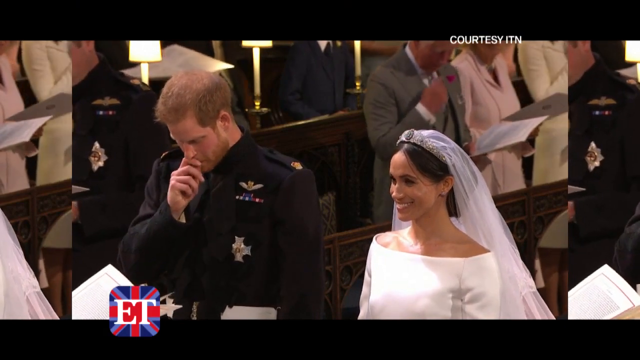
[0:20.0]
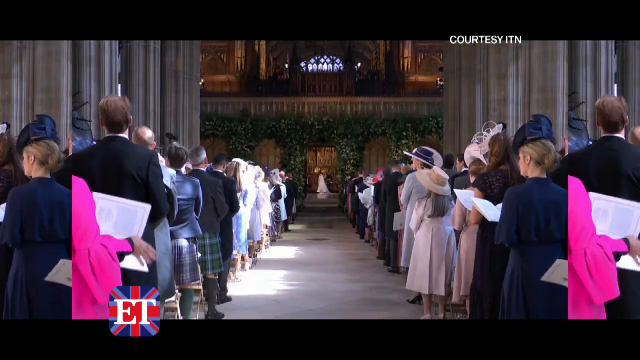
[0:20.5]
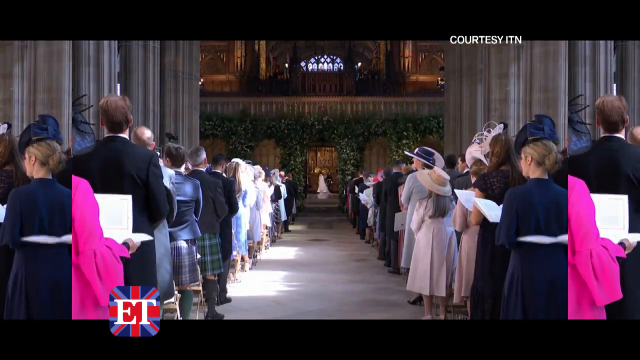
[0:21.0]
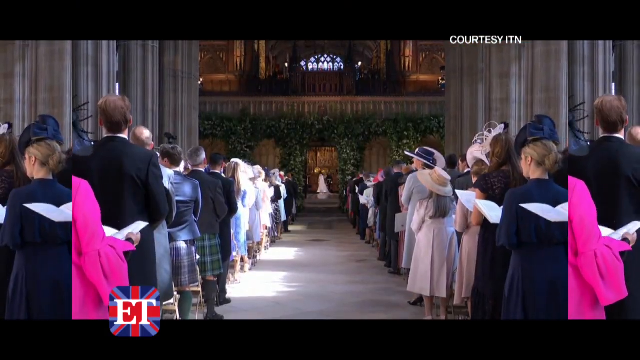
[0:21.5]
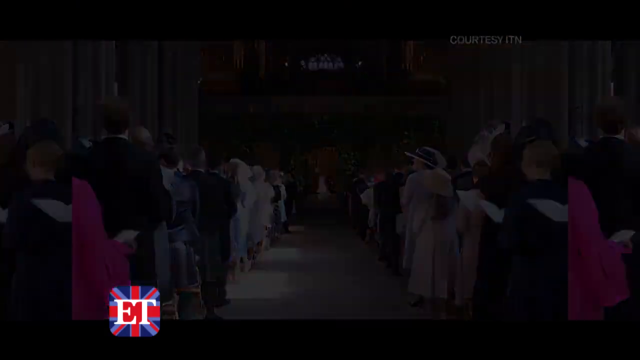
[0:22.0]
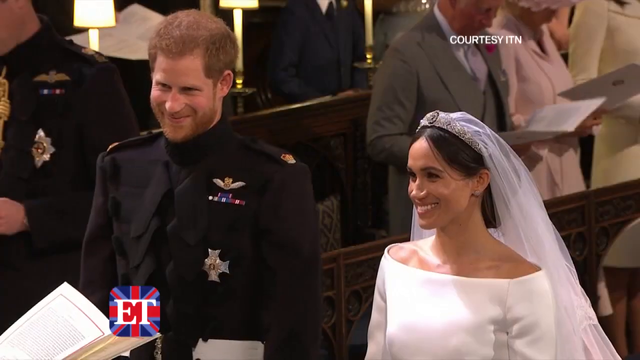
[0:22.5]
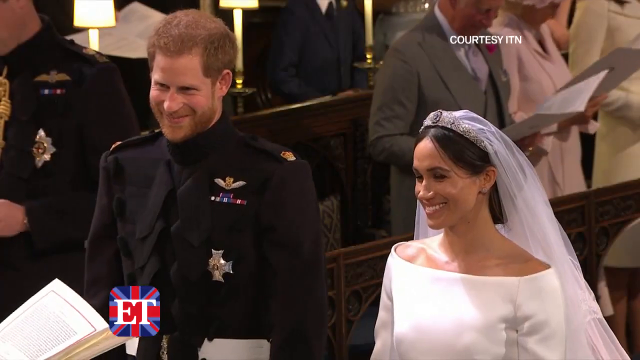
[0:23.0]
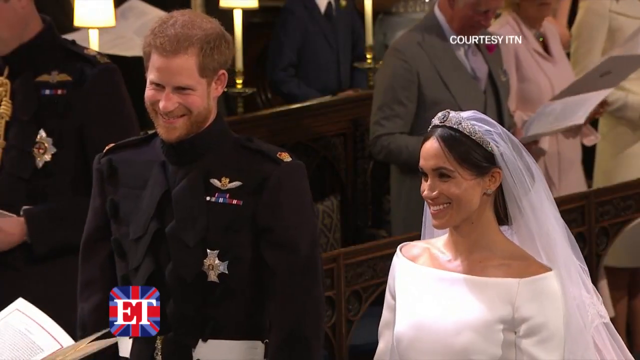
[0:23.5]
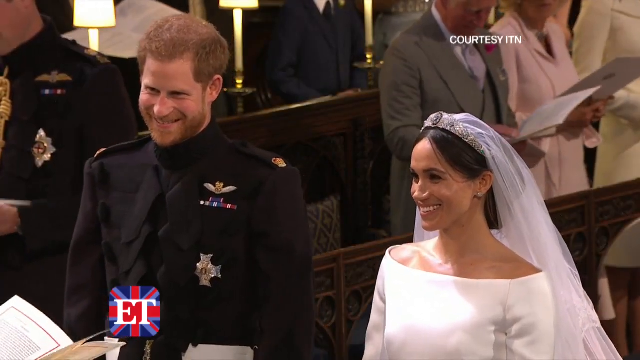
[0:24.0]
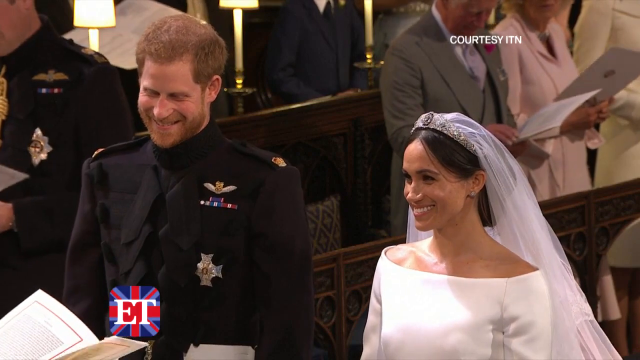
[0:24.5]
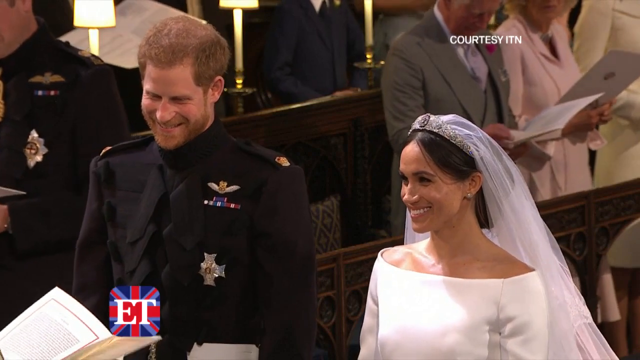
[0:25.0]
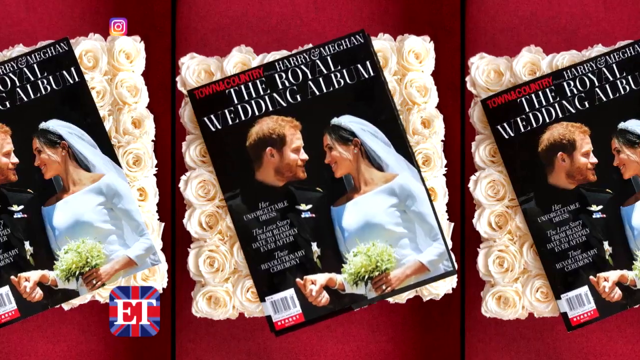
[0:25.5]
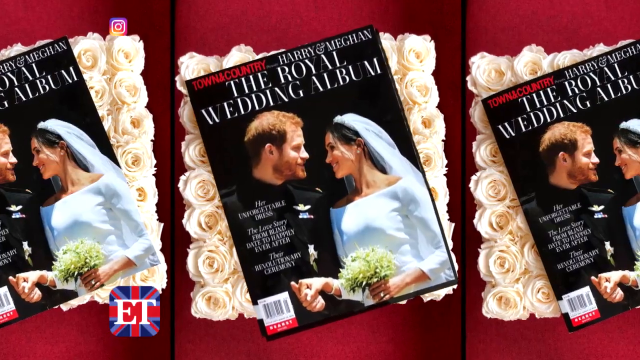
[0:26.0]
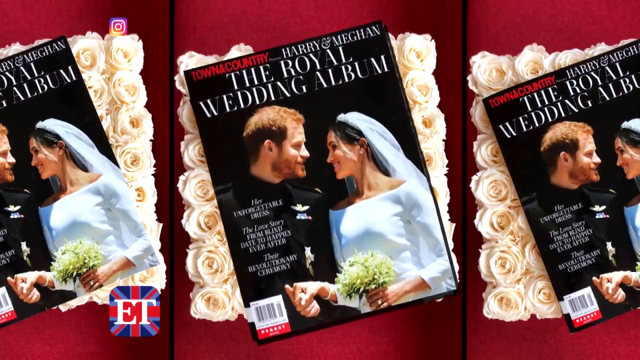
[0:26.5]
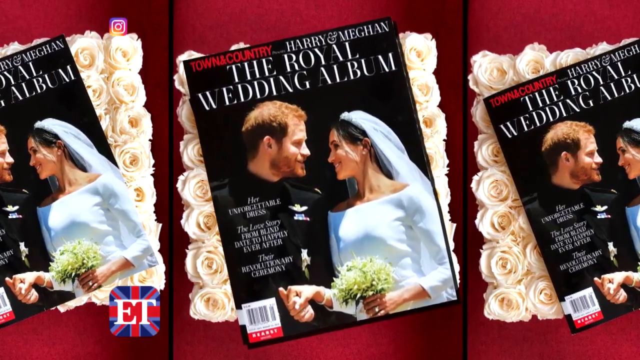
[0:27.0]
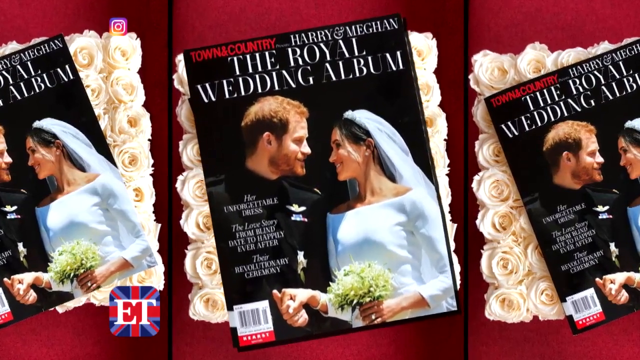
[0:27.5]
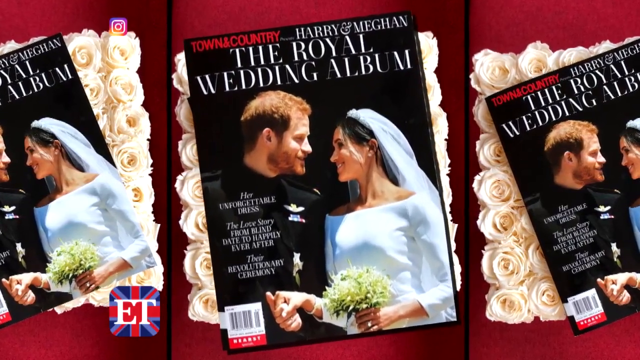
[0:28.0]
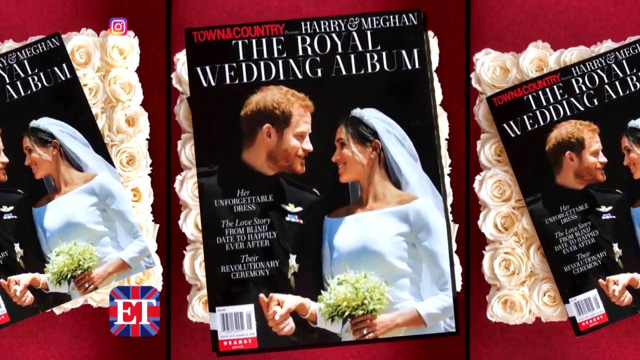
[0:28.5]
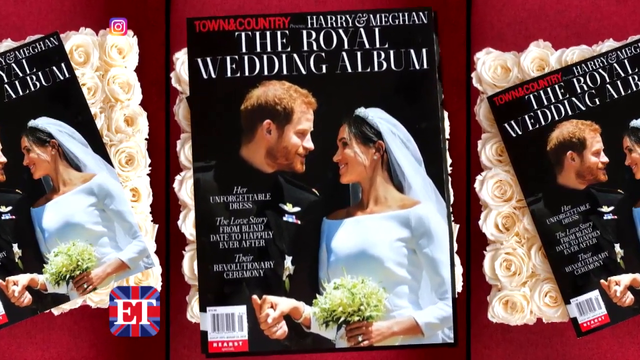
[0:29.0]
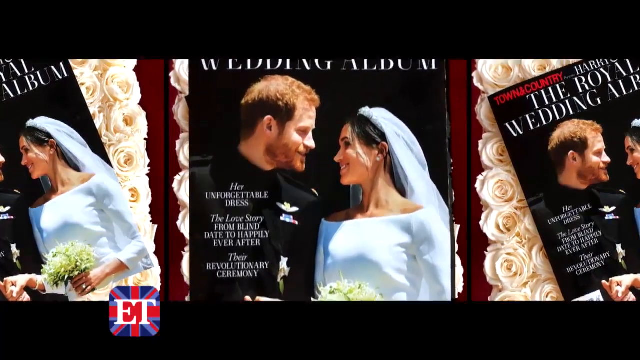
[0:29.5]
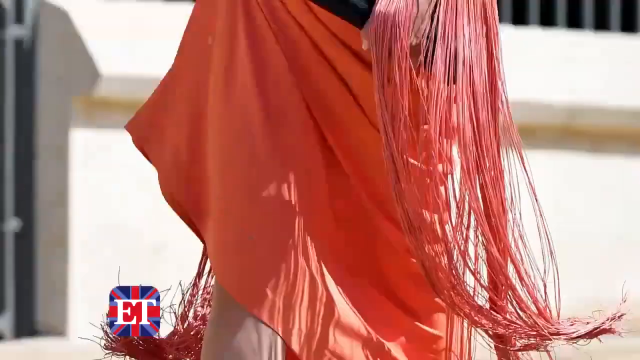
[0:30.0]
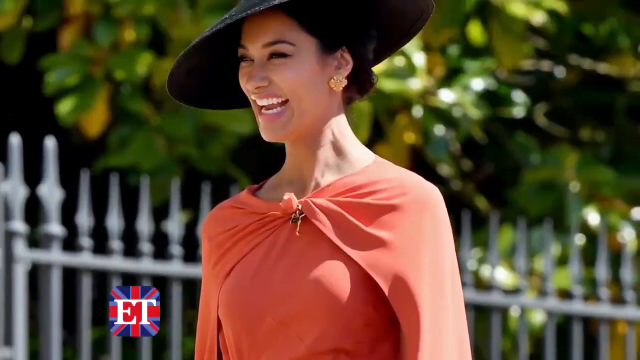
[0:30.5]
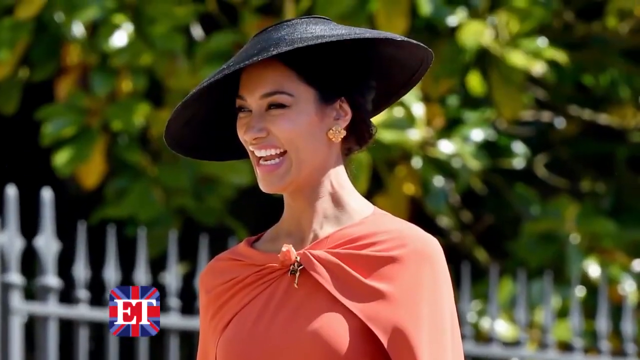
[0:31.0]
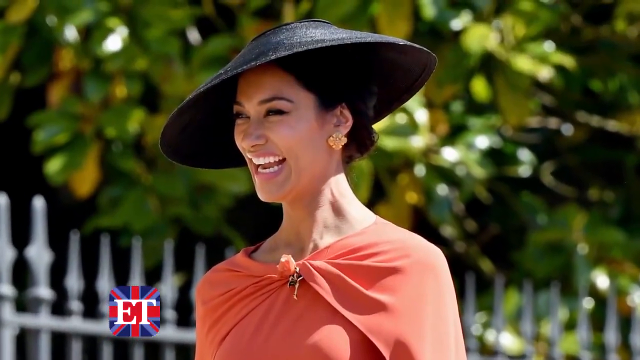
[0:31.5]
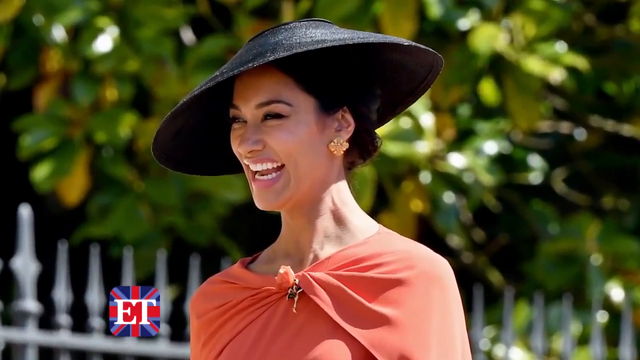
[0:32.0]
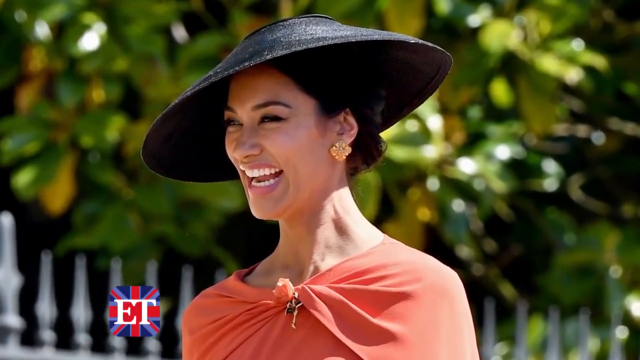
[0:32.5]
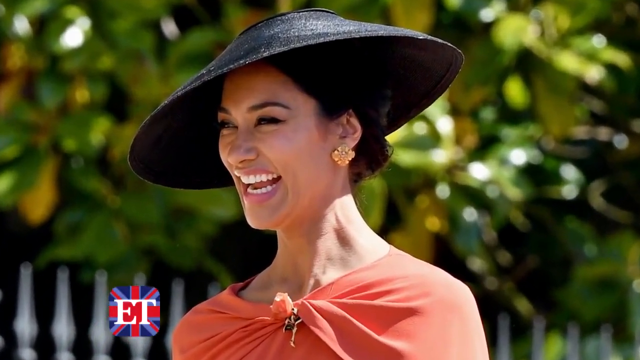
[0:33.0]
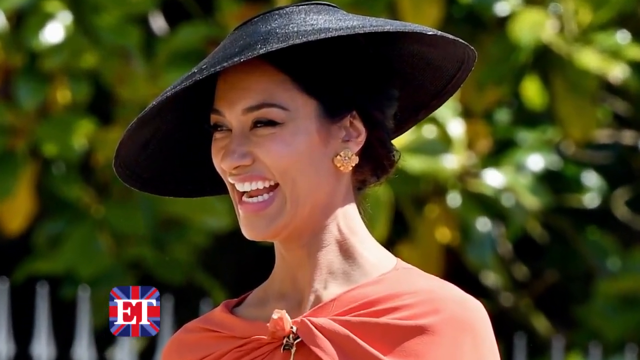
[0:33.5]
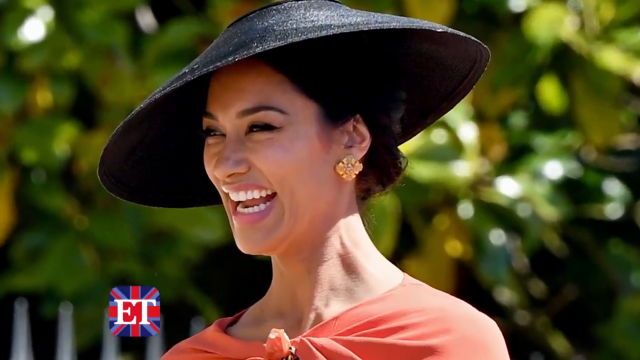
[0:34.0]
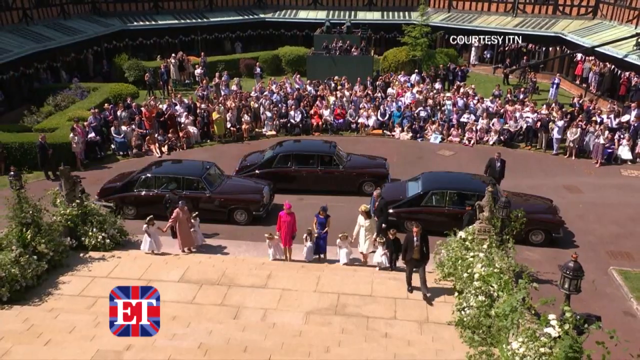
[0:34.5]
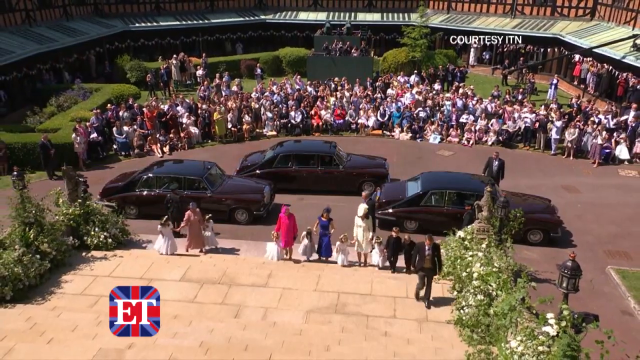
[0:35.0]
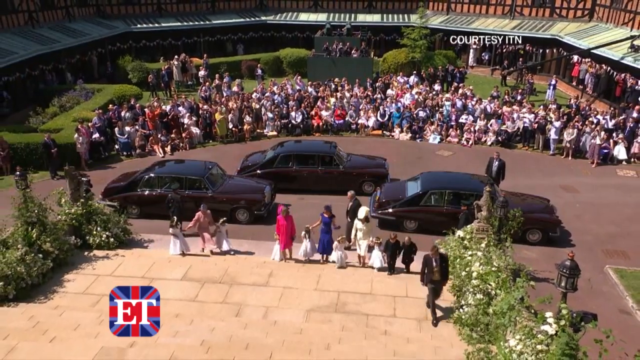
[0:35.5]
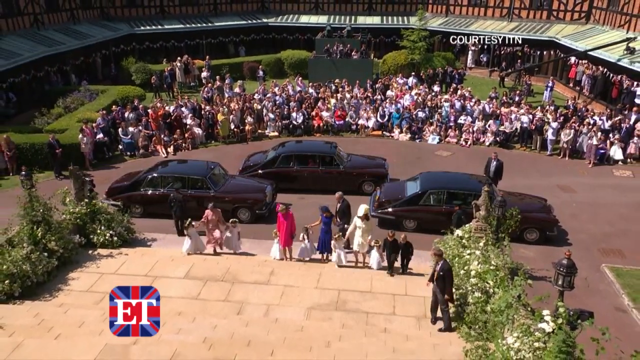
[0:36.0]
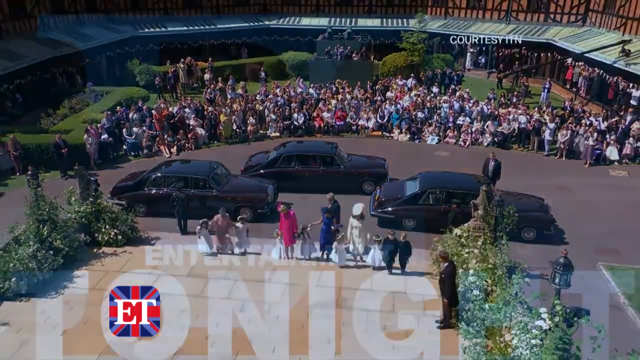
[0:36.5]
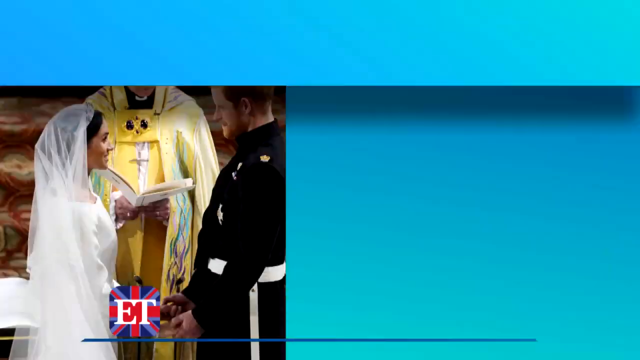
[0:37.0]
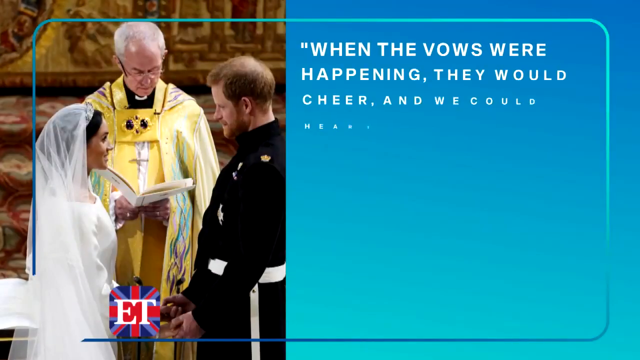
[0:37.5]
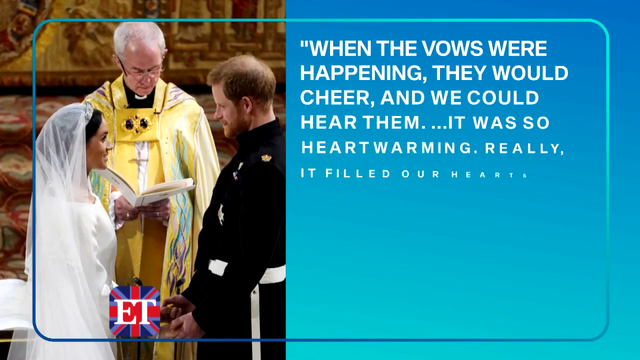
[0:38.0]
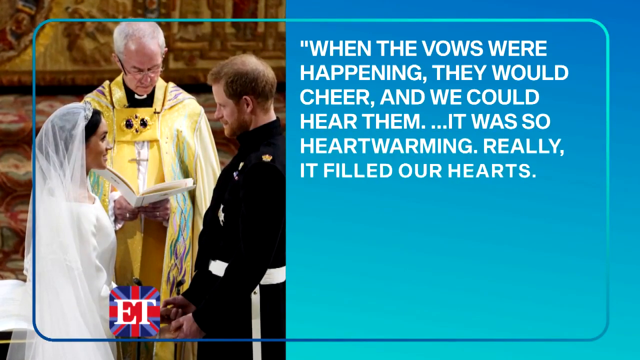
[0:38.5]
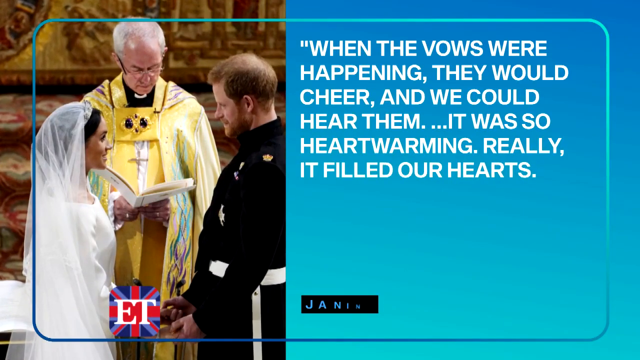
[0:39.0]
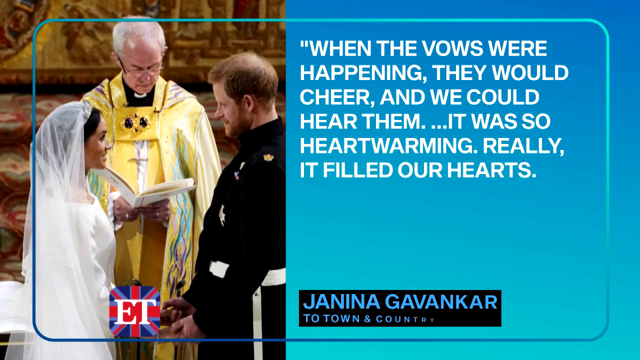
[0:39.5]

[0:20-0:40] Prince Charles takes his vows with his wife at their wedding, and text below shows it is introduced by ET. Royal wedding albums are shown, including the lady, his wife, wearing an orange dress and a black hat, laughing and smiling. A crowd is outside the wedding venue, and there are three black cars, while the royal family walks into the church. An image shows him taking the vows with the priest, with a quote written behind it: "when the vows were happening they would cheer and we could hear them it was so heartwarming really it filled our hearts". He is also shown taking the vows while his wife smiles and the crowd cheers and smiles. More albums from the wedding are shown.